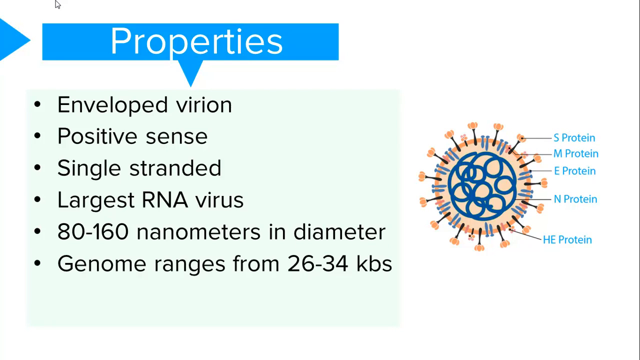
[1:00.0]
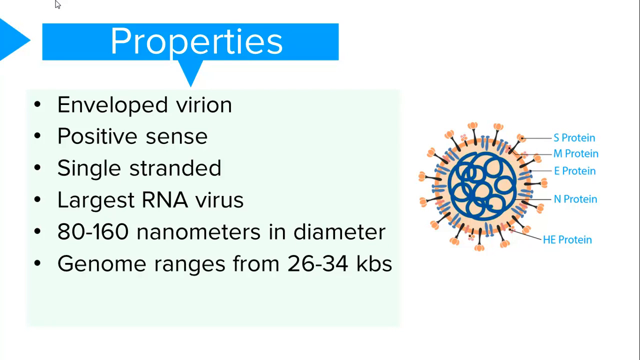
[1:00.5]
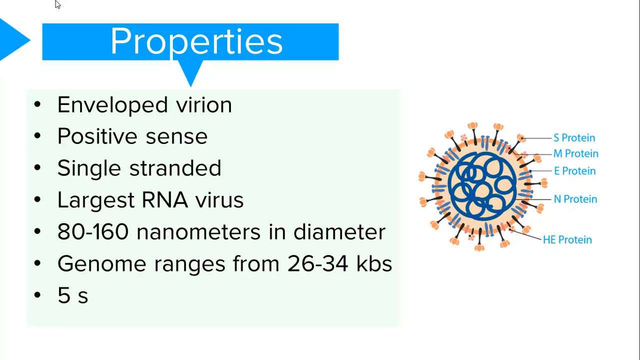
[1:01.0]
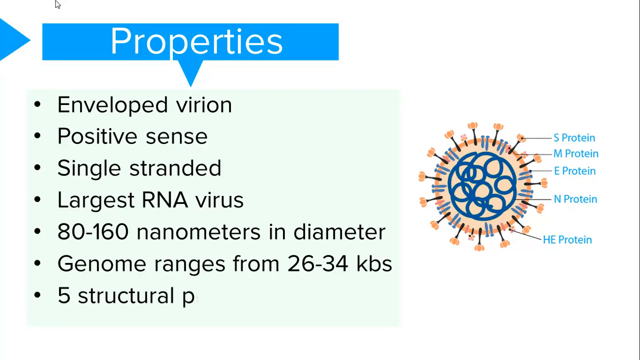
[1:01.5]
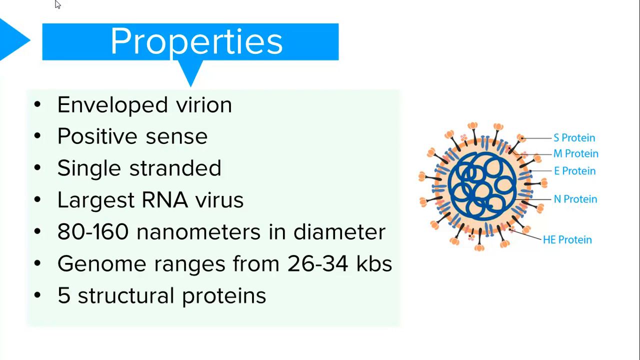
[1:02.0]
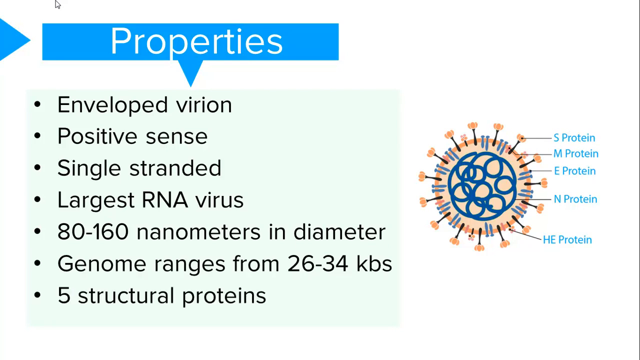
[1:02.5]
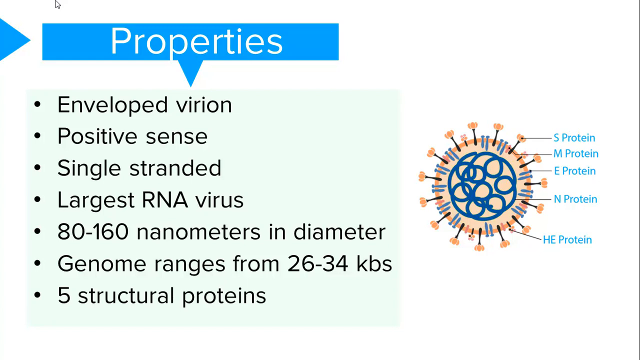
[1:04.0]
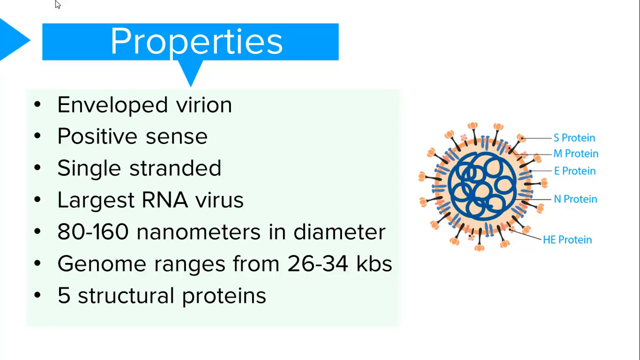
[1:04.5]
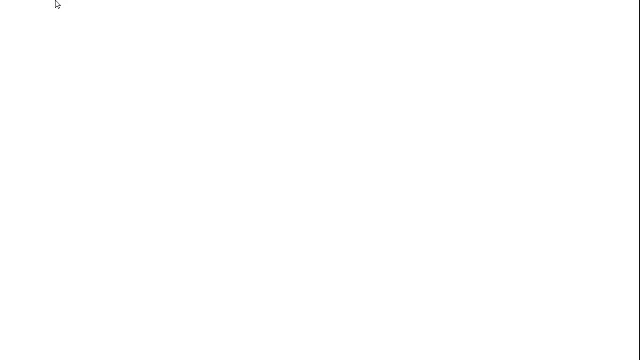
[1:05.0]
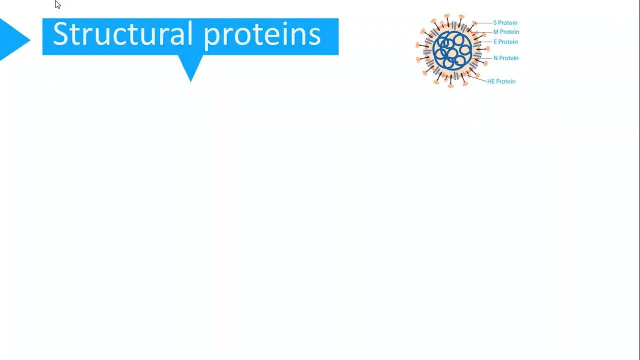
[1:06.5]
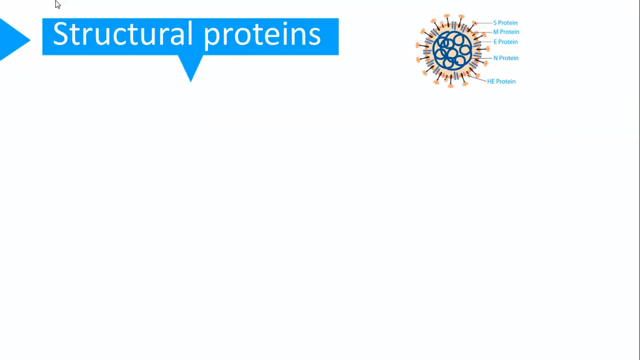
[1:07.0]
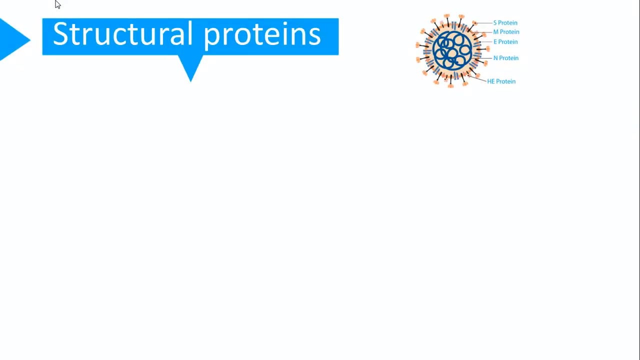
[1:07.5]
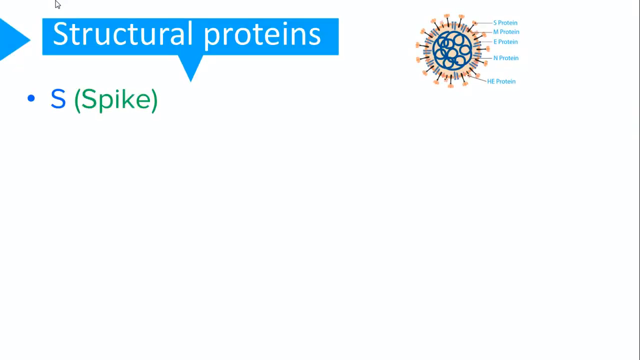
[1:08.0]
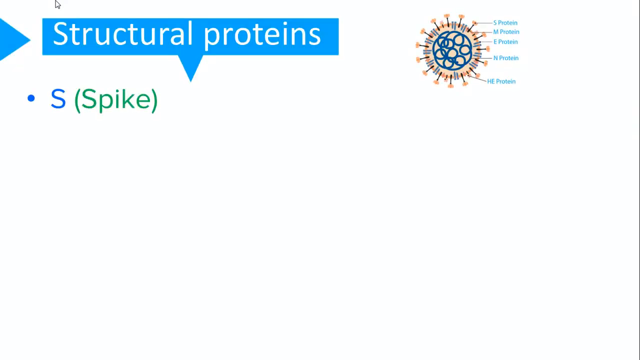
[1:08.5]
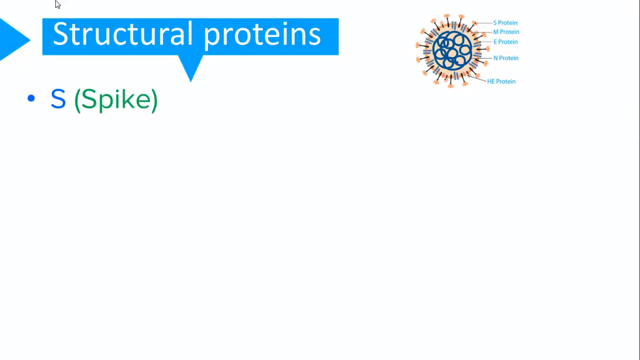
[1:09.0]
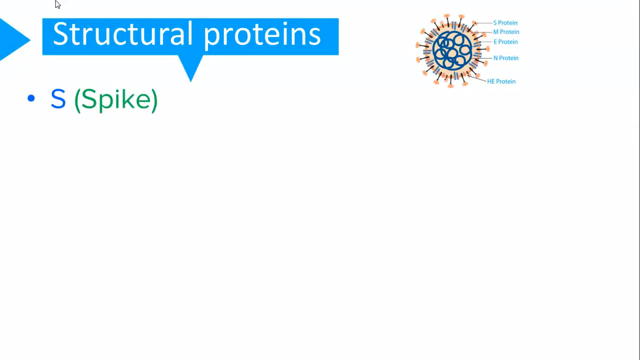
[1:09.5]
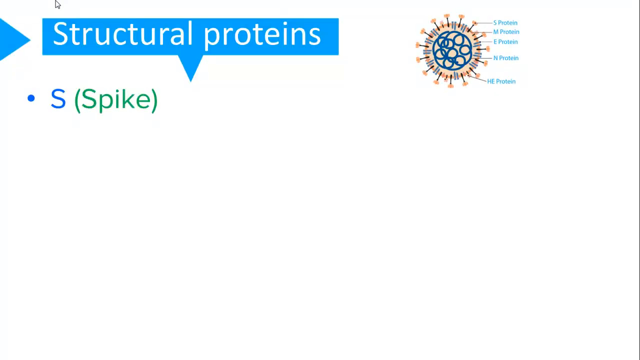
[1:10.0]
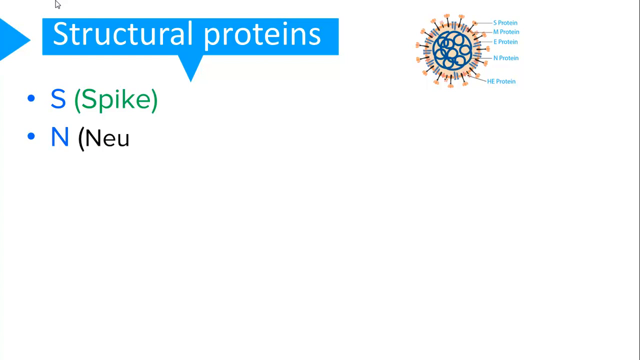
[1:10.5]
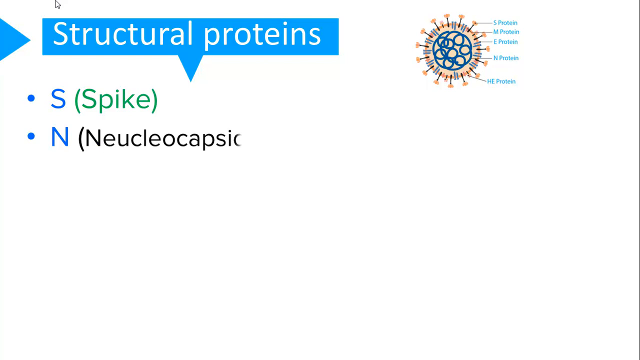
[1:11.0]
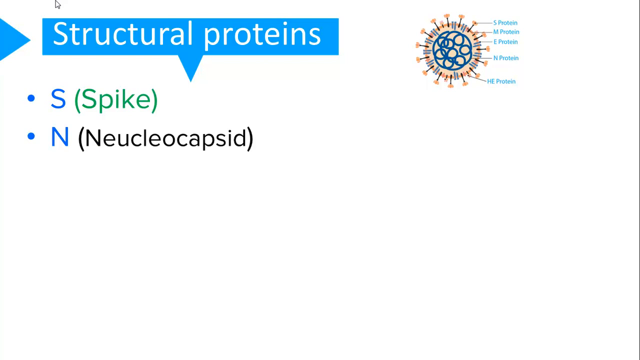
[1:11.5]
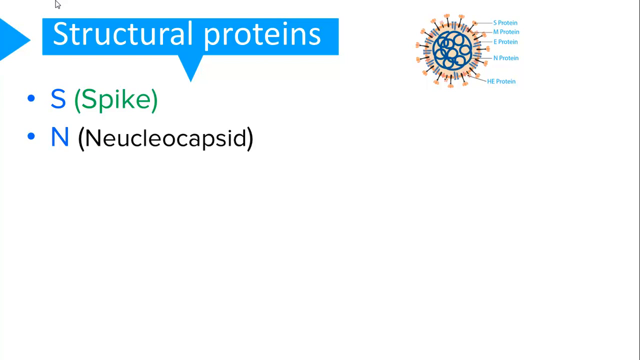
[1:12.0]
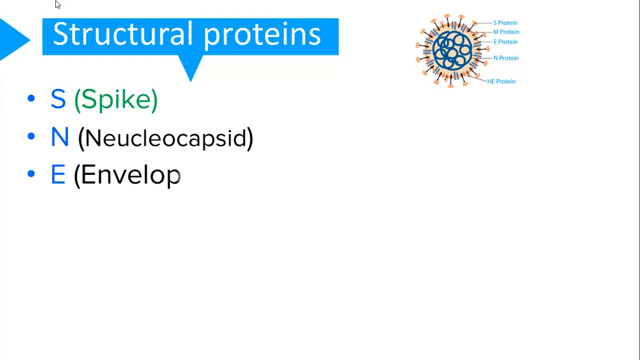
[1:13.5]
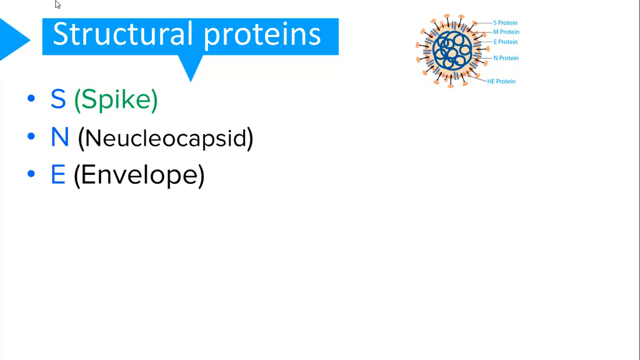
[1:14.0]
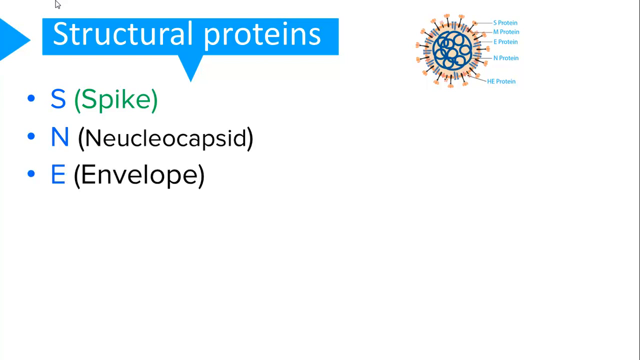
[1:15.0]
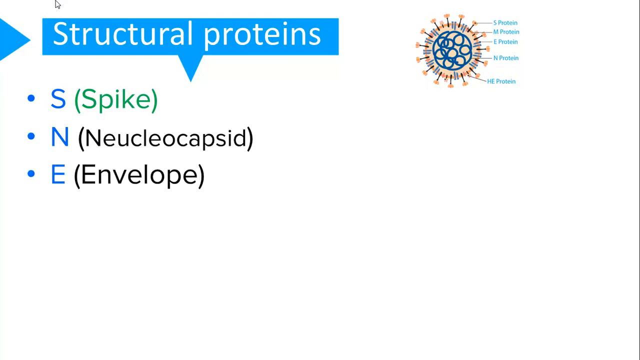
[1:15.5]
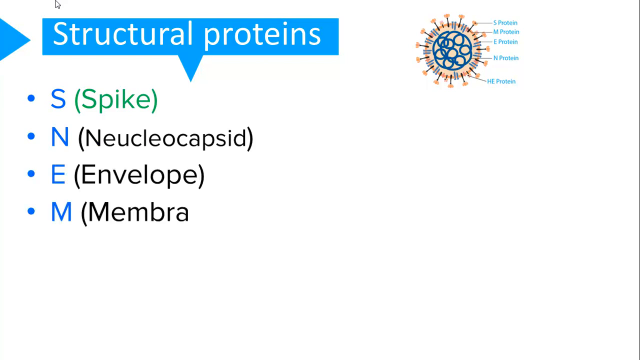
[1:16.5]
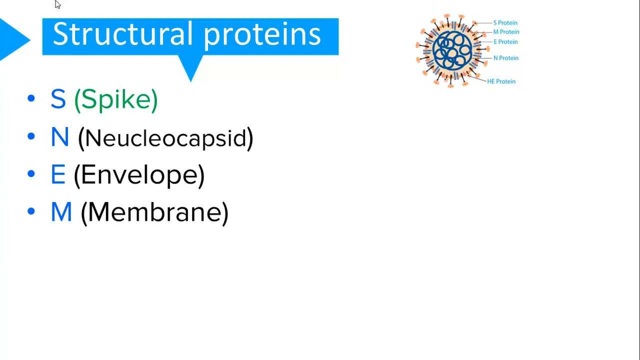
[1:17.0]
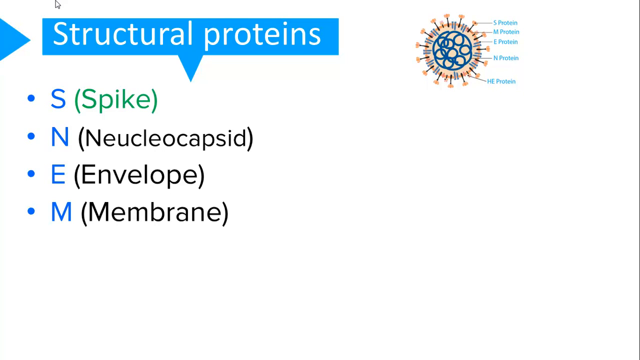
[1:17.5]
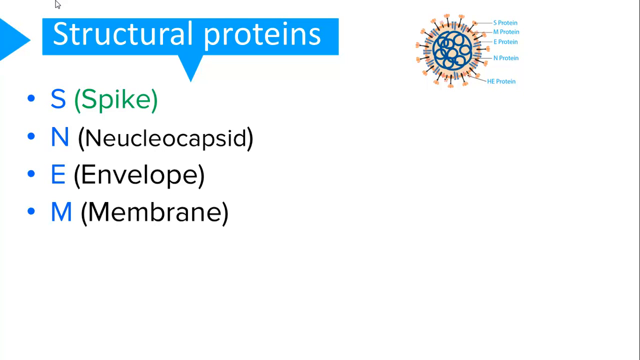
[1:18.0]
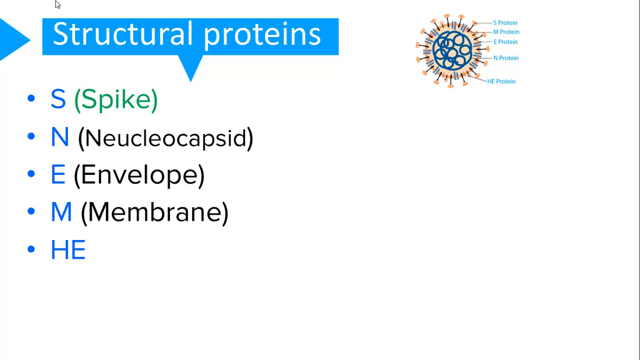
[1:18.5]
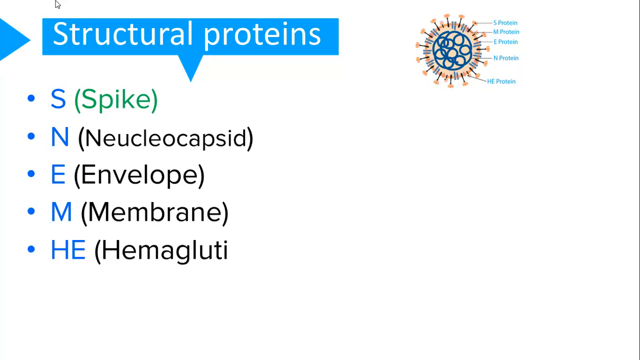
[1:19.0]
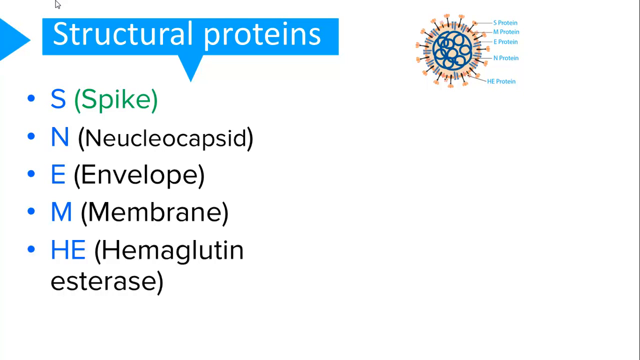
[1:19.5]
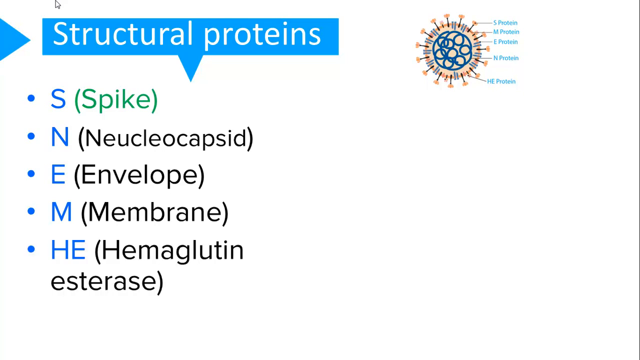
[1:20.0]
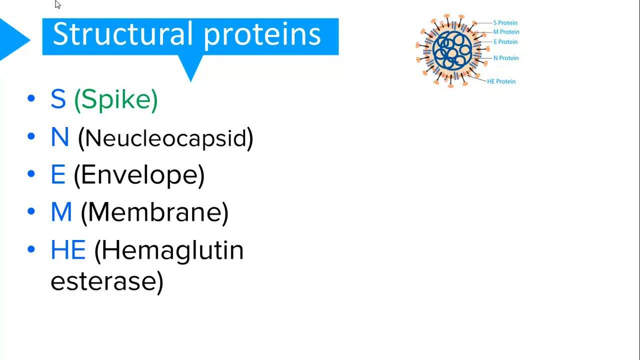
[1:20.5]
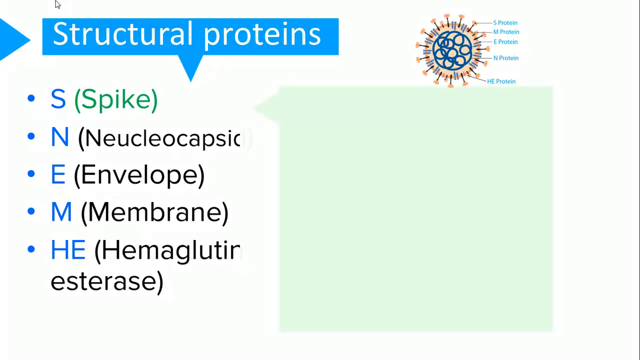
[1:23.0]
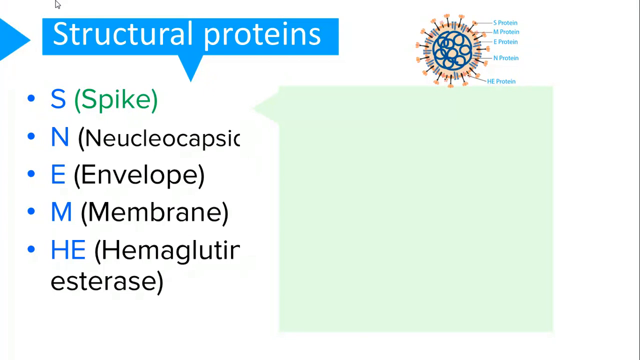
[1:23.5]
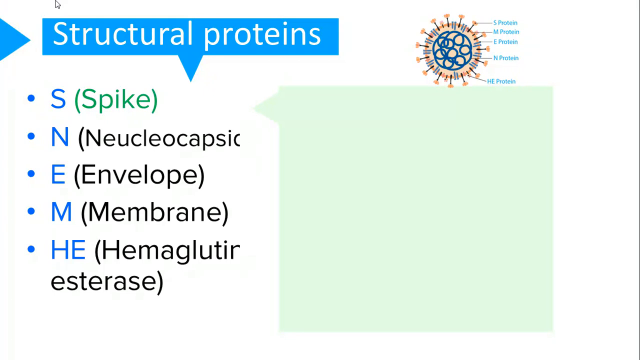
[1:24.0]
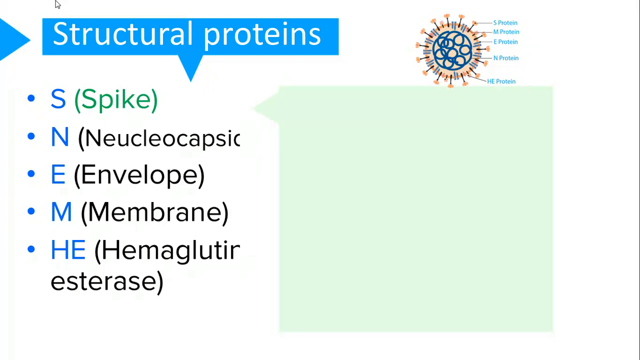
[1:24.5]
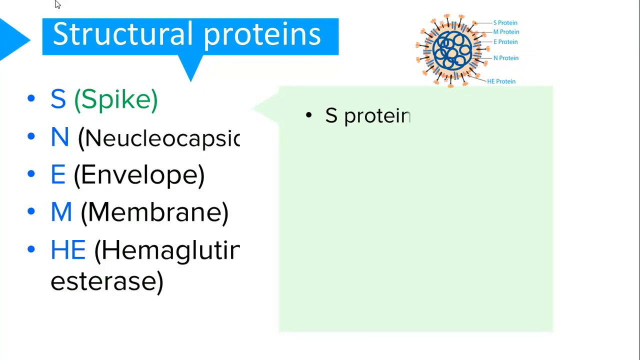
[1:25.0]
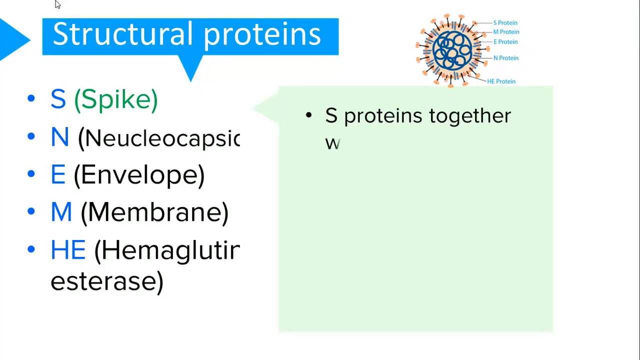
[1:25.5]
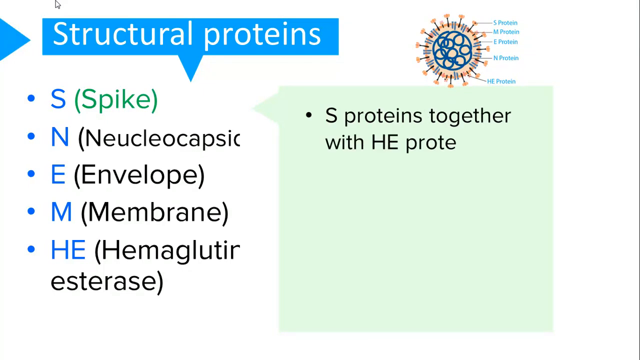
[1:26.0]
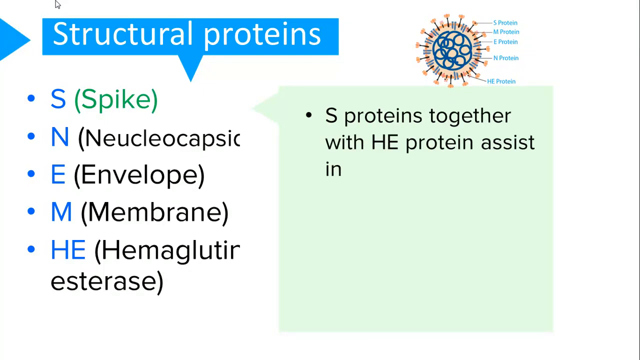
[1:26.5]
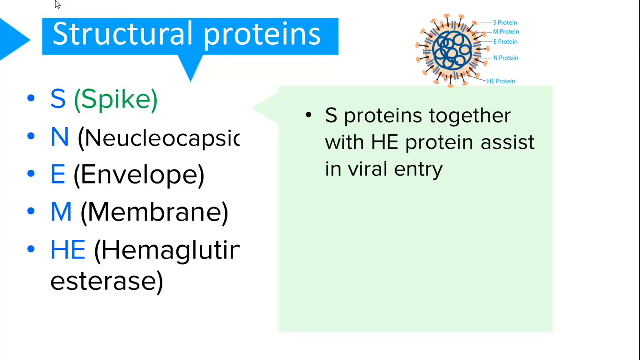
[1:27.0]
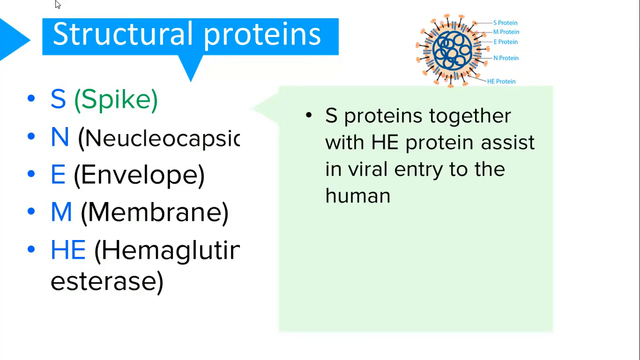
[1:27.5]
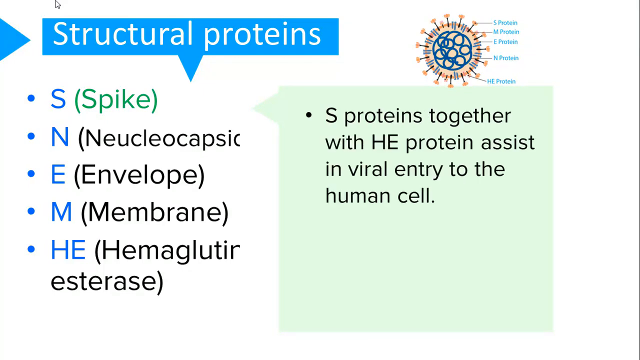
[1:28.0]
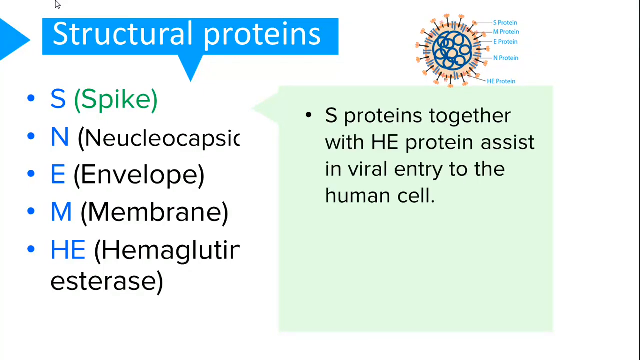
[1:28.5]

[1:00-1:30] A seventh bullet point types across the mint green rectangle, stating that the virus has five structural proteins; it is listed underneath the bullet point about the genome range of 26 to 34. The next slide is labeled "Structural Proteins", with a smaller image of the COVID-19 virus in the top right. Underneath the title are the letters for the structural proteins connected to the COVID-19 virus, with their names next to them in parentheses: S for spike, N for nucleocaspid, E for envelope, M for membrane, and HE for hemaglobin esterase. A light green rectangle appears on the right side of the screen with black text being typed into it.